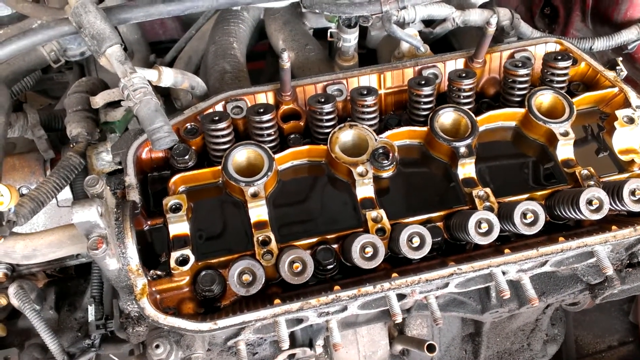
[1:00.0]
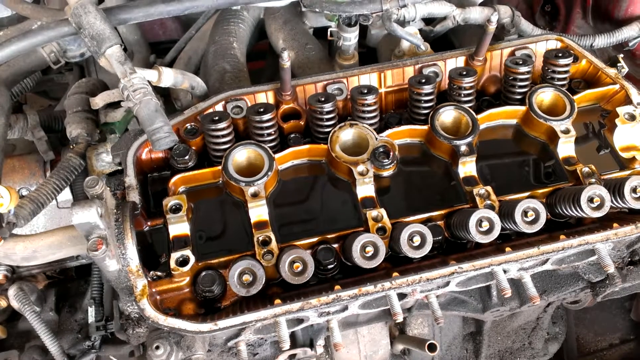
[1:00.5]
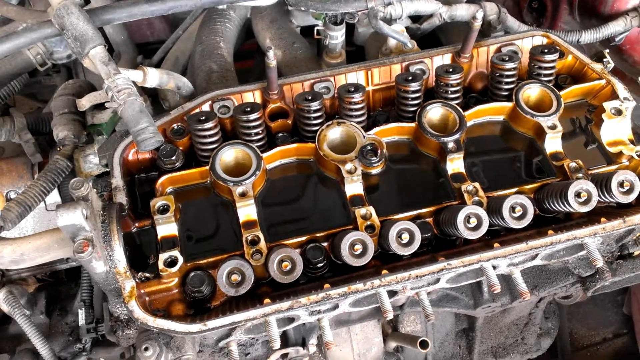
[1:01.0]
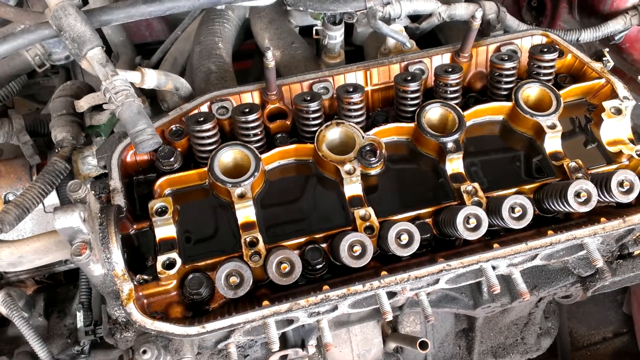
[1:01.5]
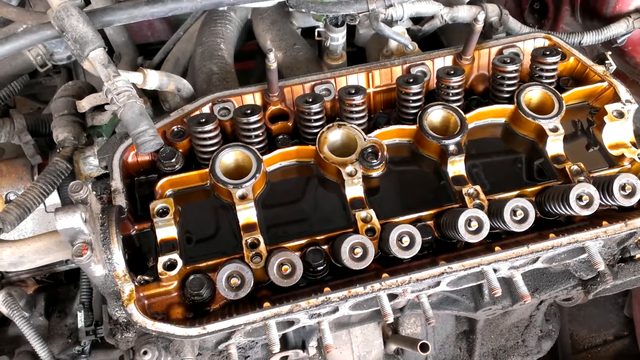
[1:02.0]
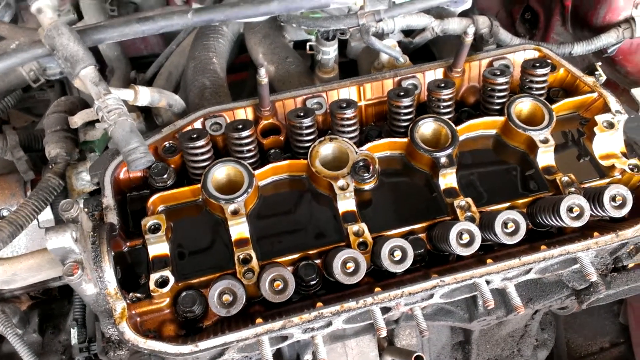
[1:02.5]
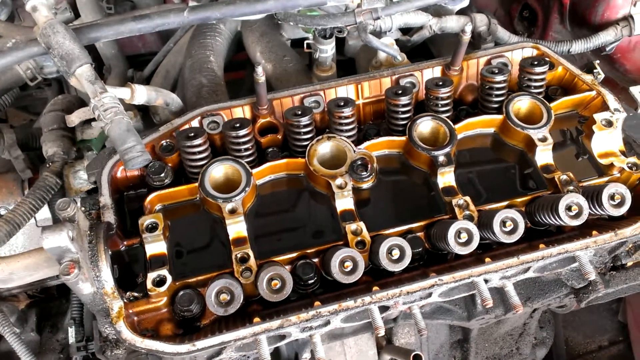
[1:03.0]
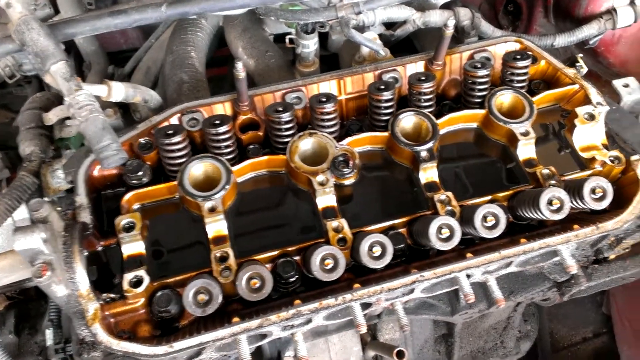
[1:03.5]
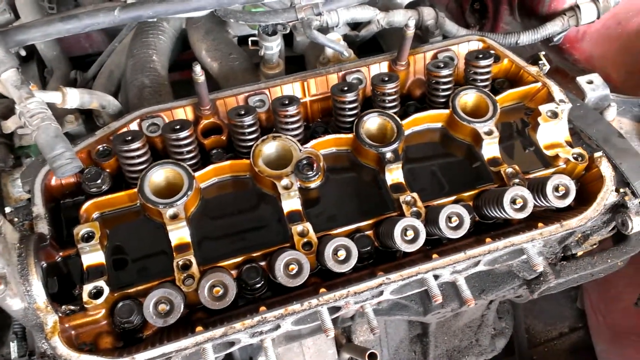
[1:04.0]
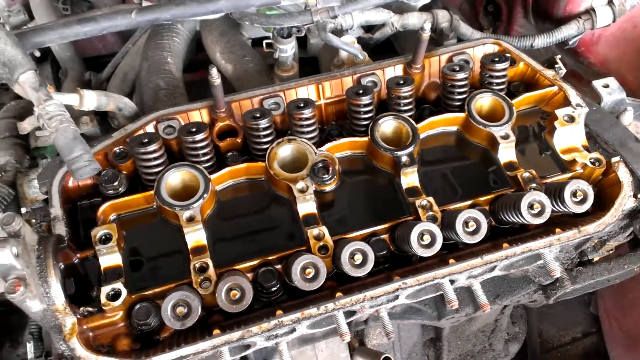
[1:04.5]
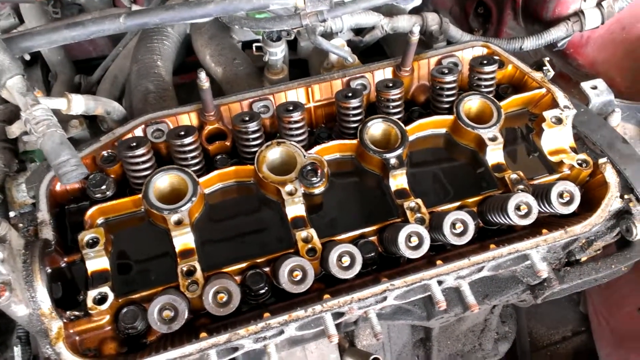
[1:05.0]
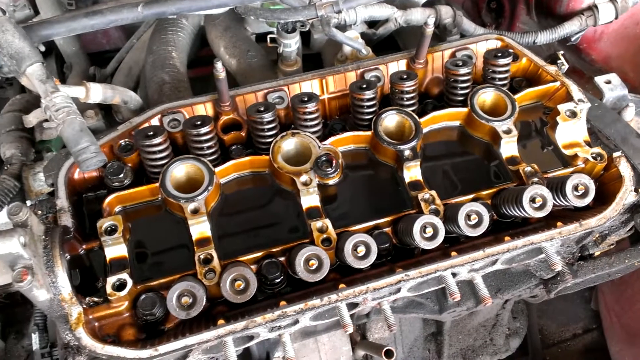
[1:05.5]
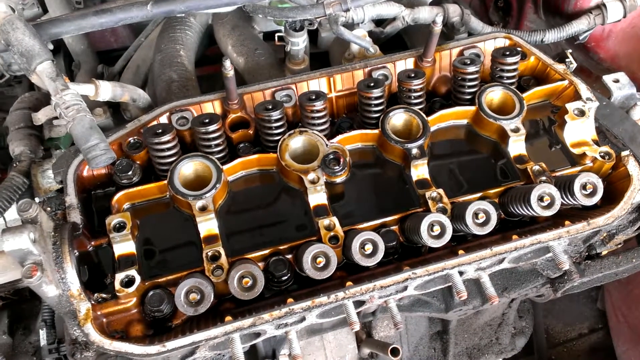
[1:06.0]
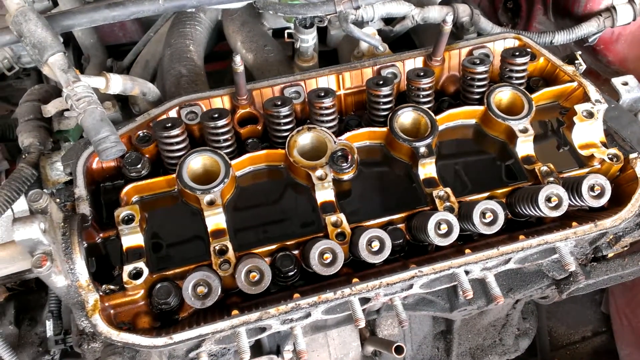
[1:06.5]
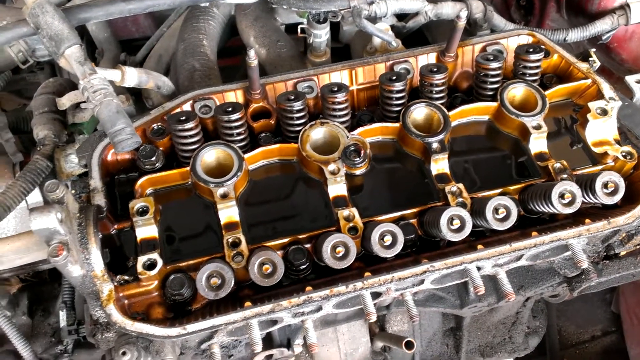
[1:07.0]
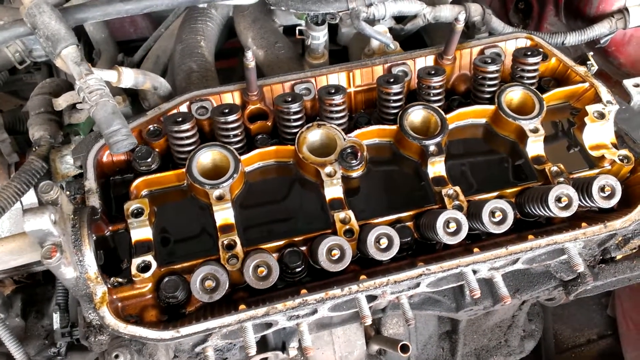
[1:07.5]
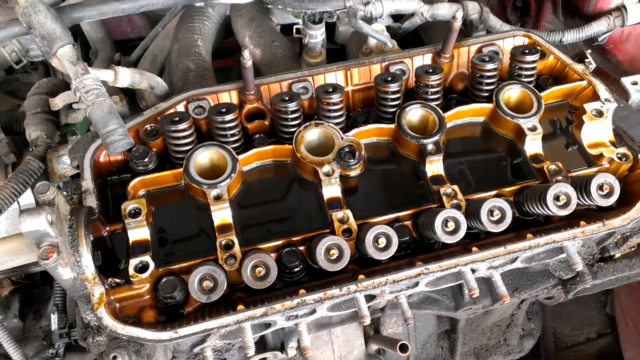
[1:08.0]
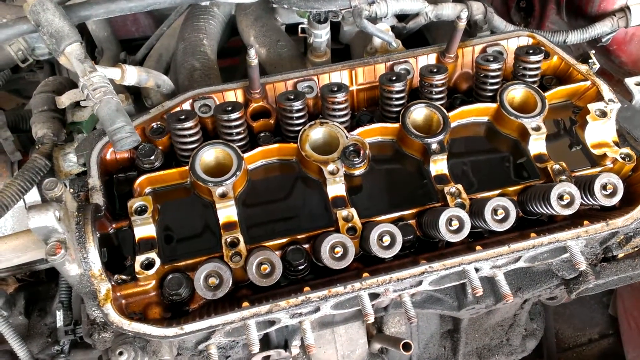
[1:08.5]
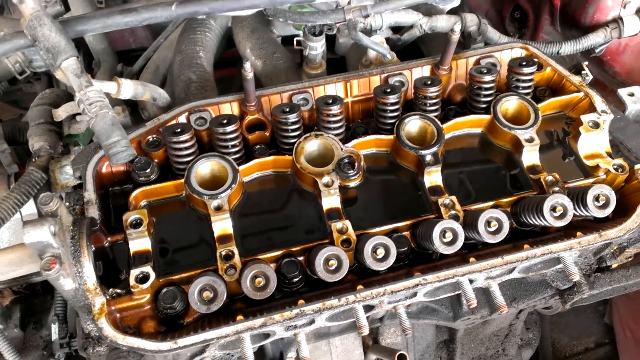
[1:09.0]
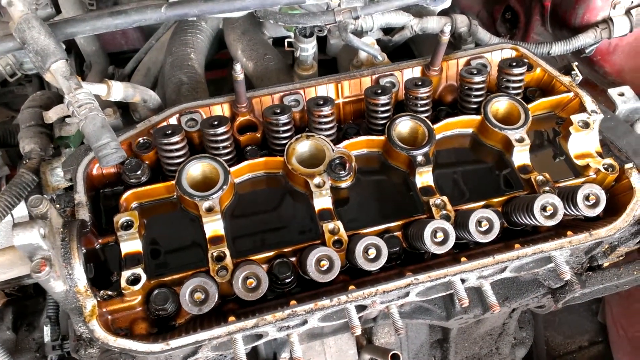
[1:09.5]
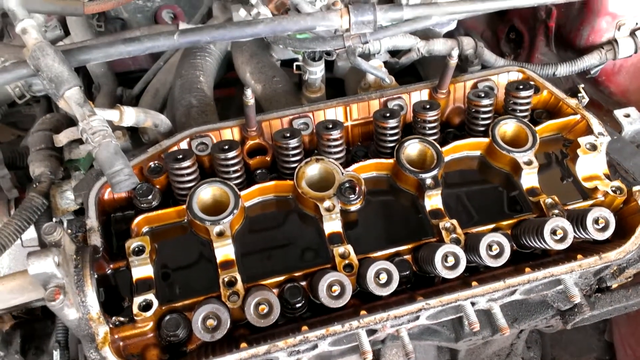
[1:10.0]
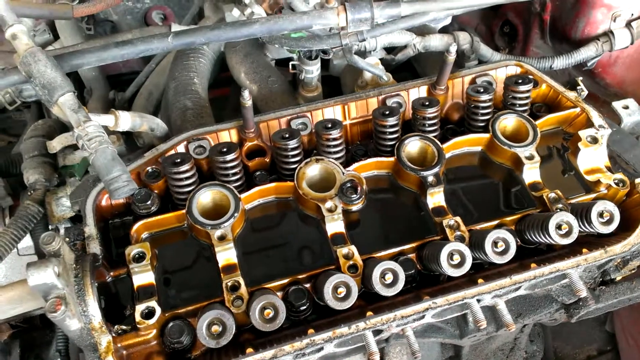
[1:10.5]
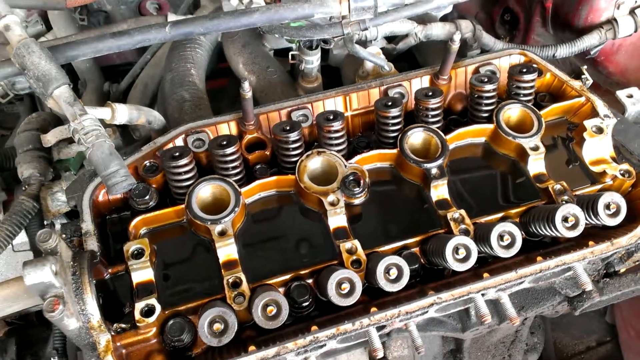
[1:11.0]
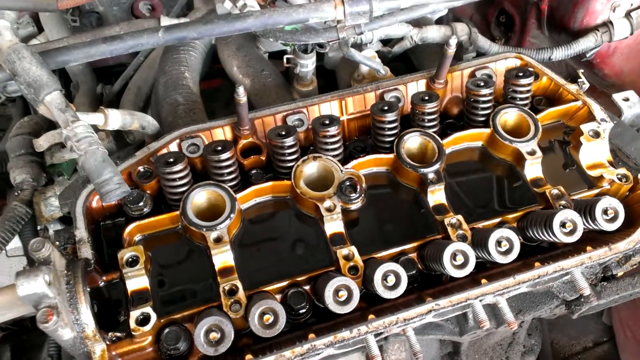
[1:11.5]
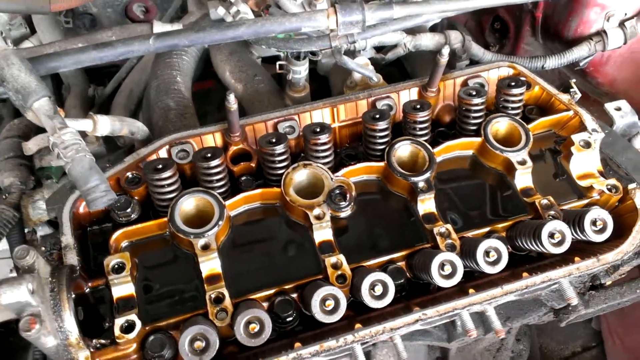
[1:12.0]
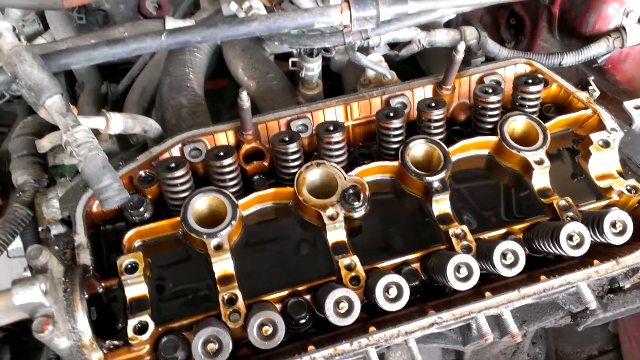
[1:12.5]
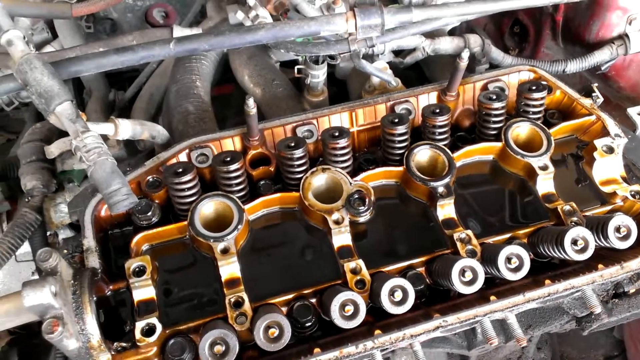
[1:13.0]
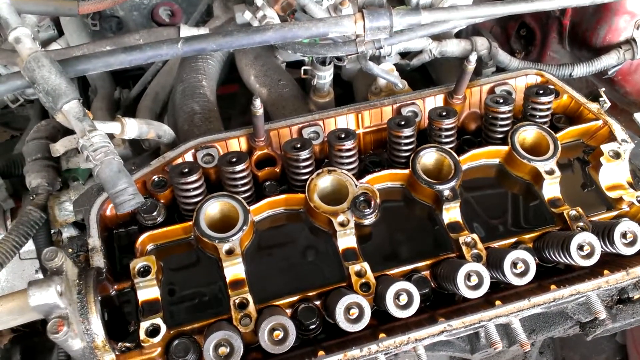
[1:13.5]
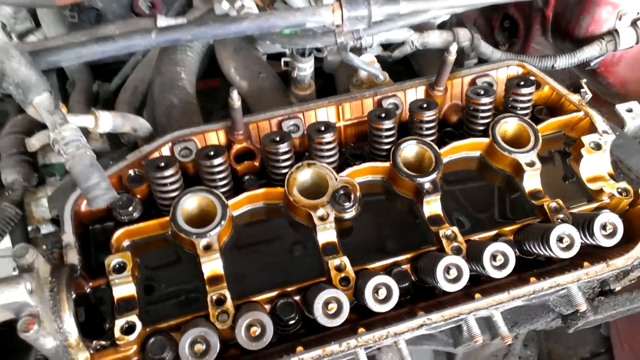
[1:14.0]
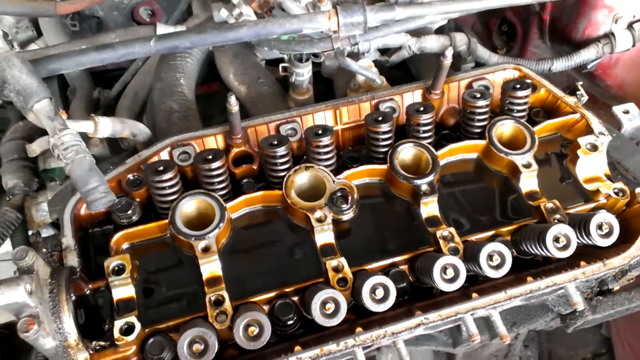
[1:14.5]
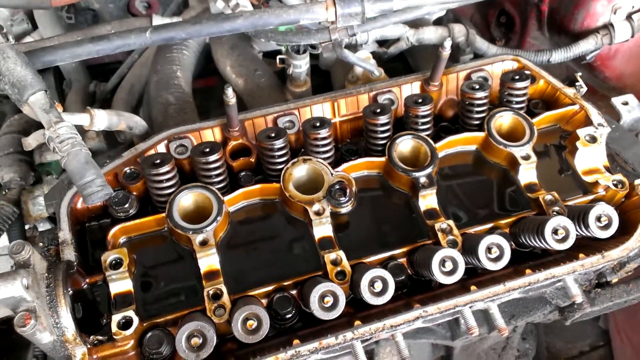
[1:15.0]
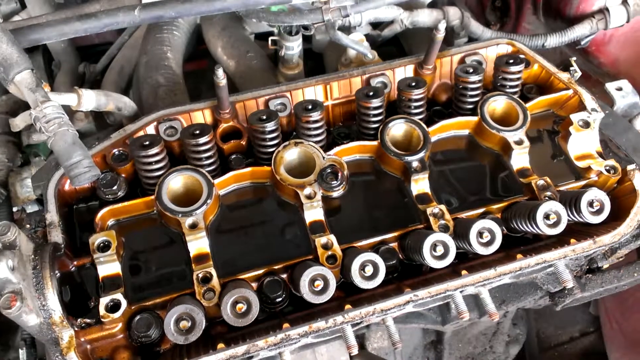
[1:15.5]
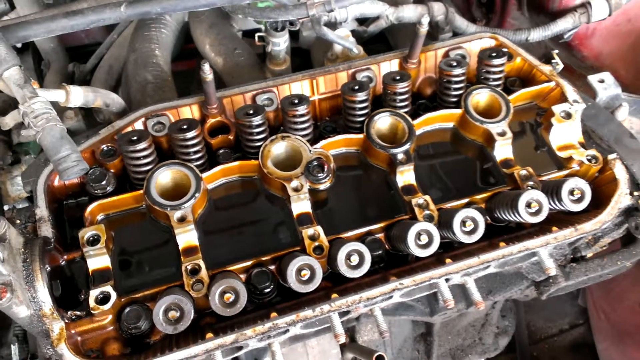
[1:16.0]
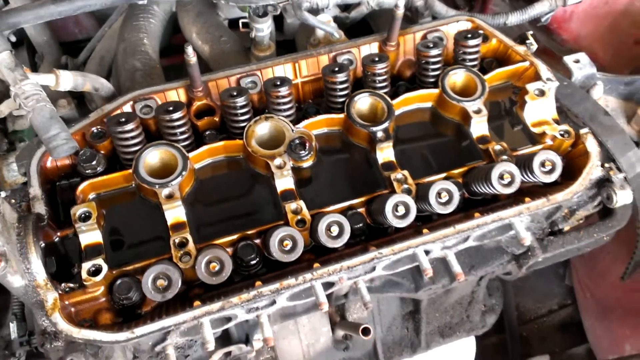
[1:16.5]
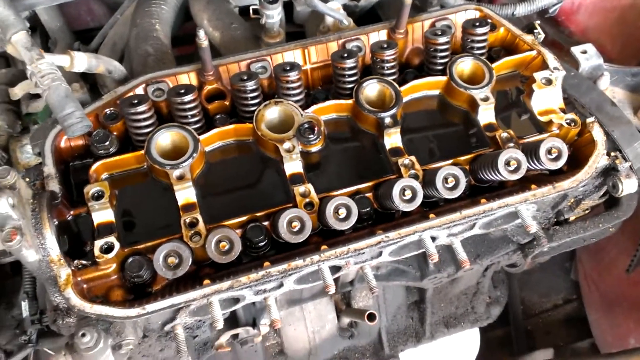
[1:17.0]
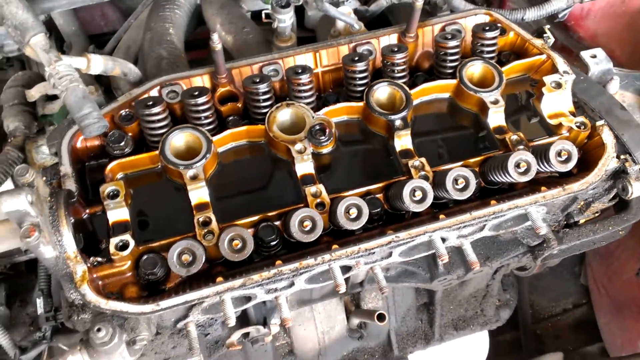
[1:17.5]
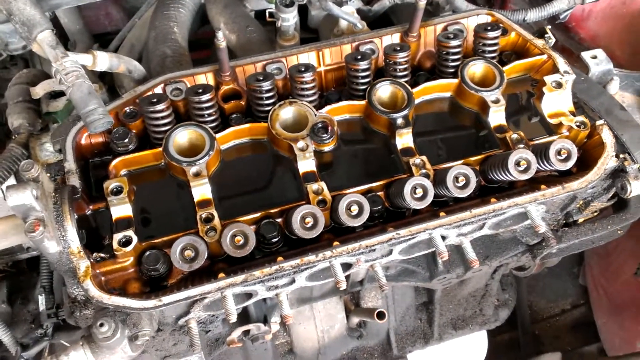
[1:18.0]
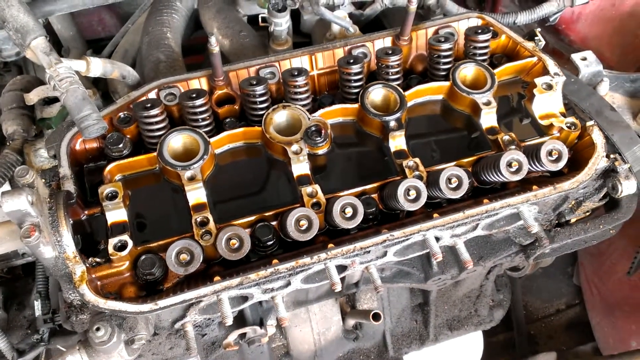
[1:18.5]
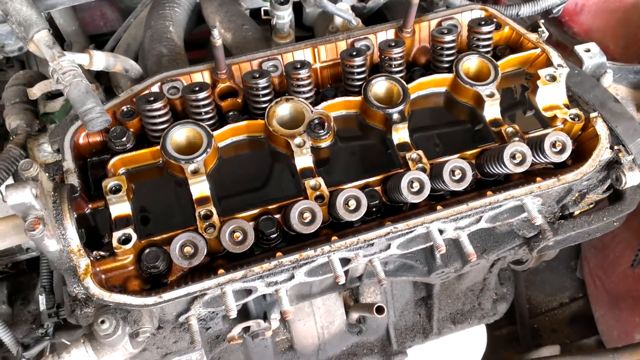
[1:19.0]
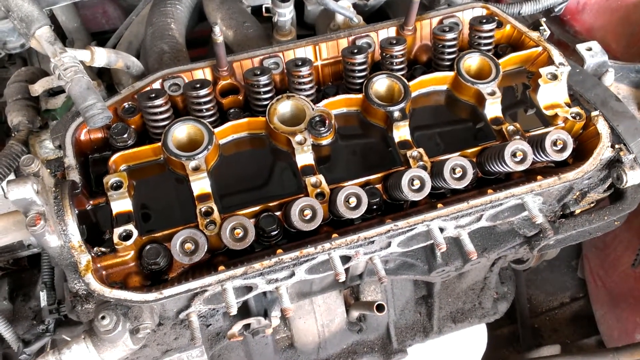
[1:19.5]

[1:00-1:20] A piece of machinery is in the middle of a vehicle, with four bolts in the middle, eight bolts at the top and eight bolts at the bottom. Above it, several wires, copper tubes and hoses are connected to the piece of machinery and run to different parts of the vehicle. The shot is a close-up of the piece of machinery with its bolts. On the right side of the screen a bit of the red vehicle shows, along with a close-up view of the copper hoses, wires and tubing connecting to the machinery. The camera pans around for an up-close shot of this part of the vehicle, showing the metal tube above the piece of machinery.